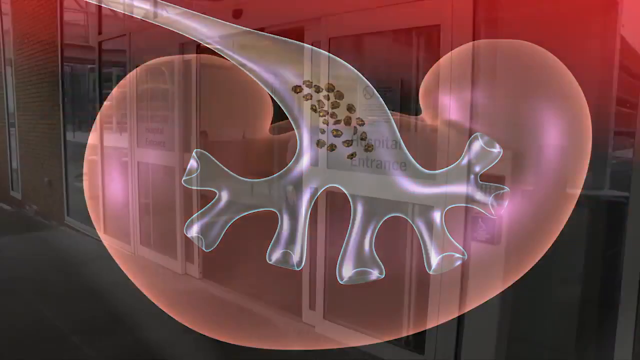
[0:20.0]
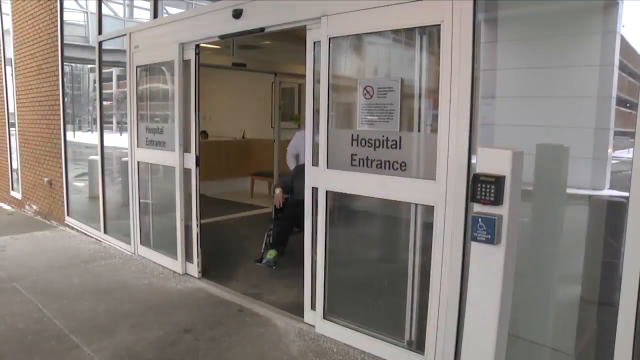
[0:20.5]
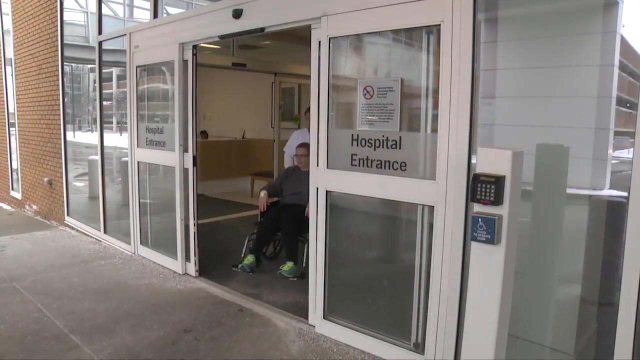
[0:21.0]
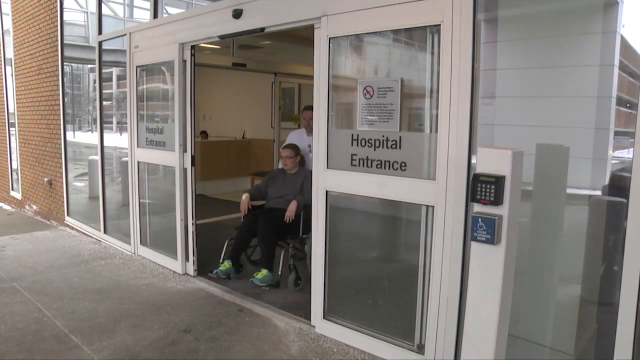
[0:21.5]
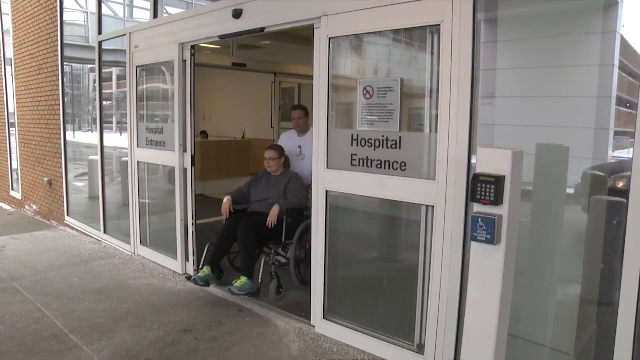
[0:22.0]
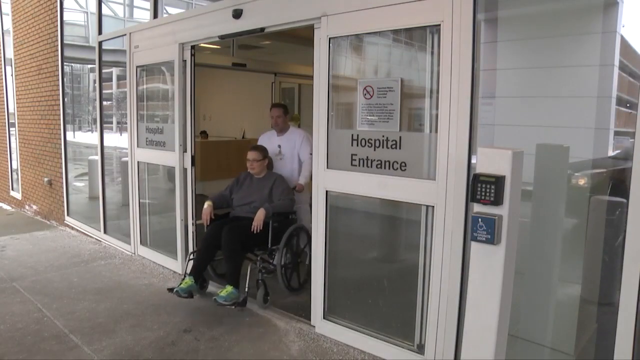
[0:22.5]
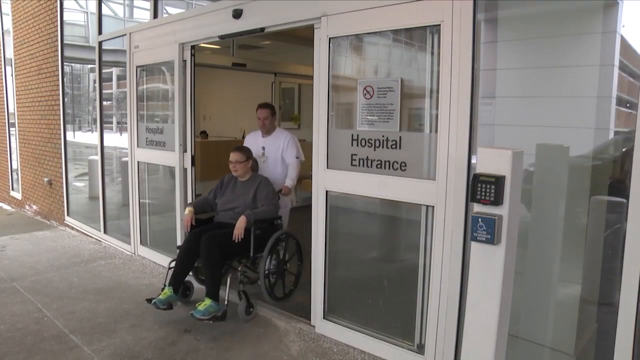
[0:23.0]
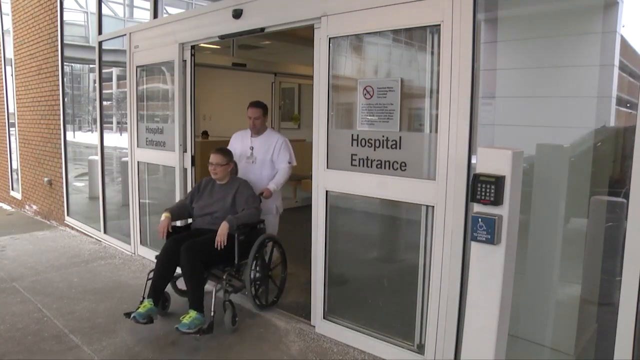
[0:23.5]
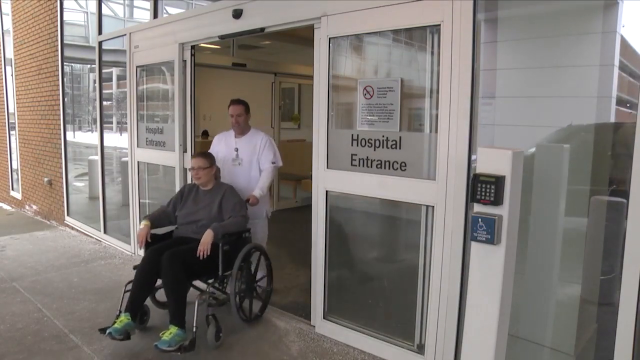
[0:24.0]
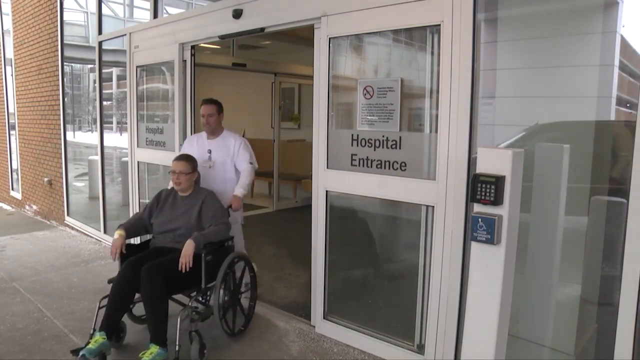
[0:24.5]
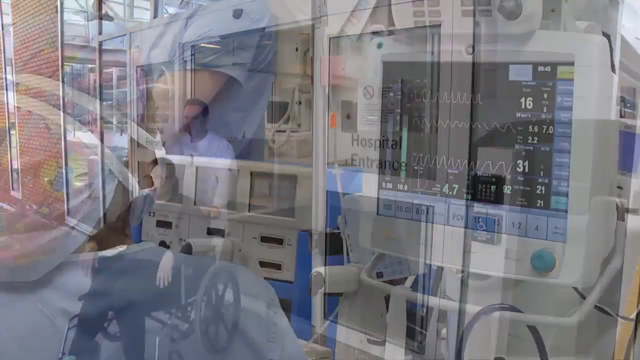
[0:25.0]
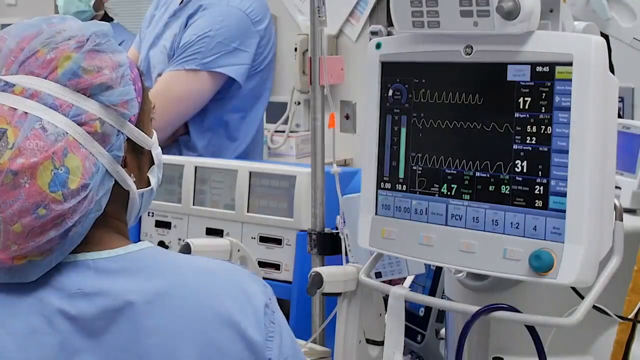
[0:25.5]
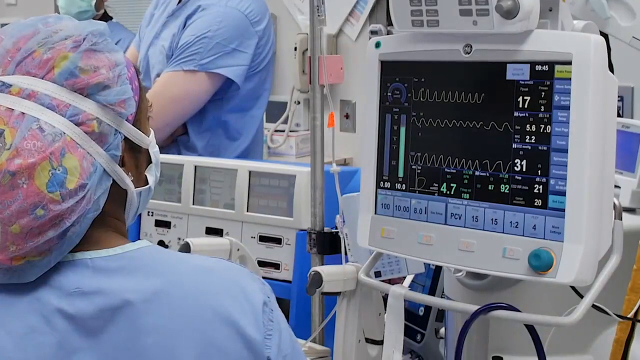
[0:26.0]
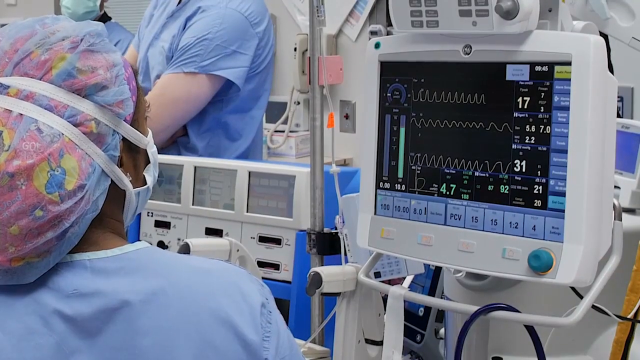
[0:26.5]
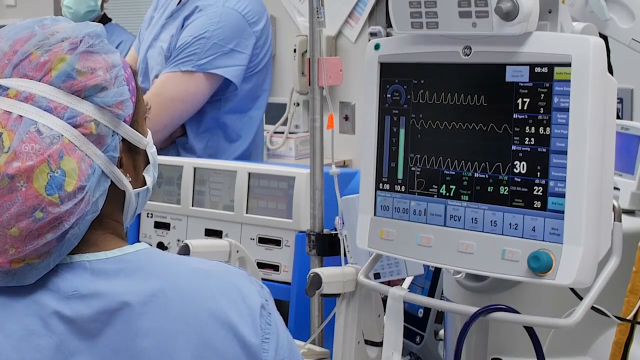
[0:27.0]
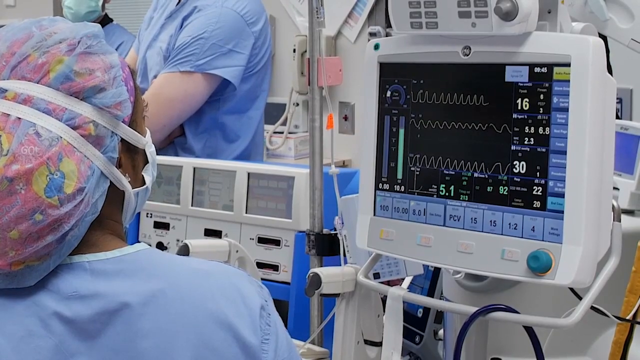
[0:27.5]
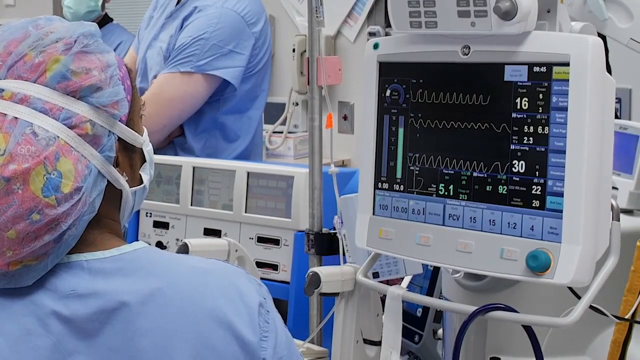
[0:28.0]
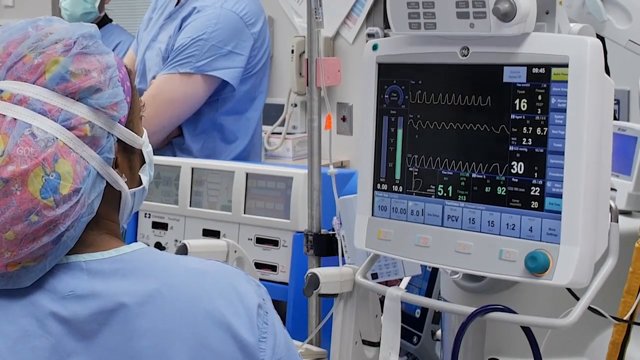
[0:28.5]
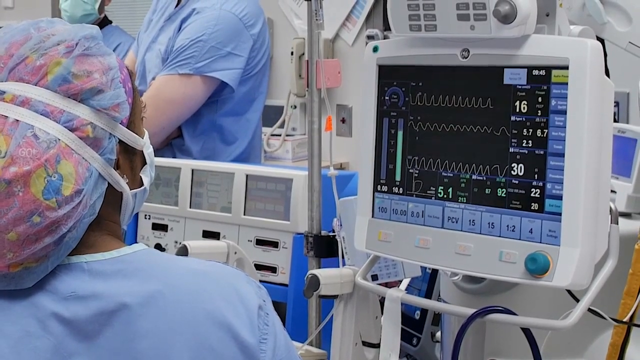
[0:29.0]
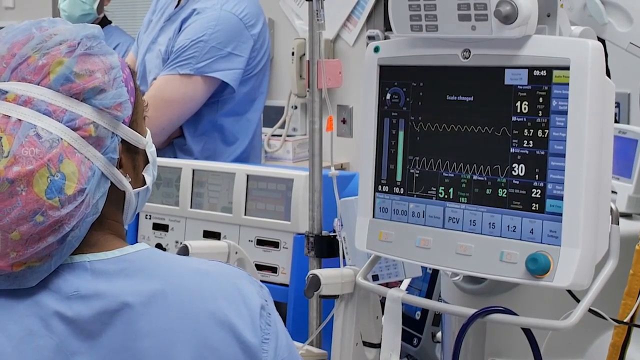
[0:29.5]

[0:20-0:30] A picture of a human kidney shows the branches on its interior, with the main, largest branch full of stones. The scene changes to a hospital entryway with automatic doors, where a man in a white shirt rolls a woman in a wheelchair out of the hospital. A sign on the entrance door is about not smoking in the facility. The woman is heavy, wears glasses and does not look happy. Next comes the inside of a hospital surgical room, with a machine on the right showing the patient's vitals. A nurse wearing a mask is on the left, another nursing or surgical assistant in blue scrubs stands in the left center, and in the far back left another surgical assistant is visible from the mask down.